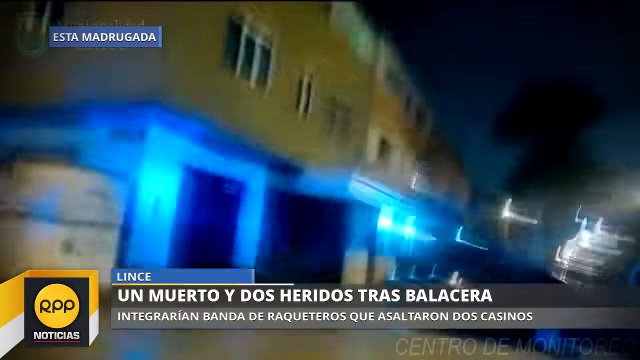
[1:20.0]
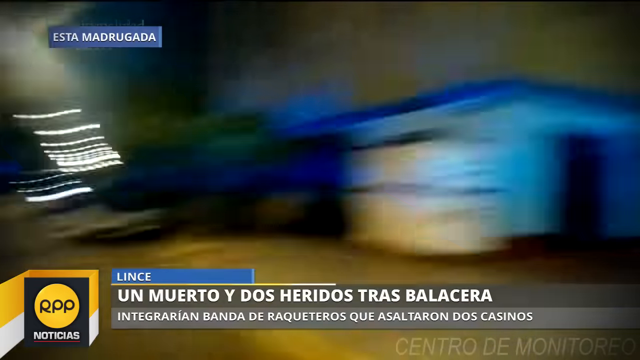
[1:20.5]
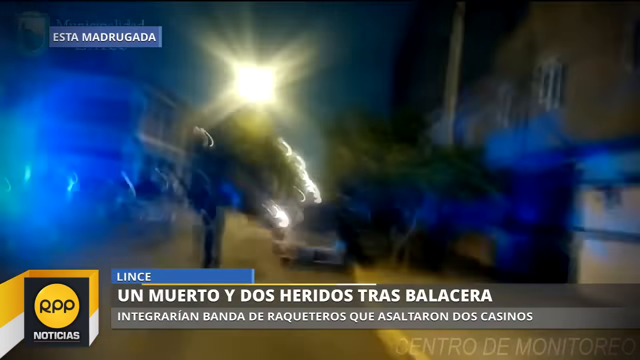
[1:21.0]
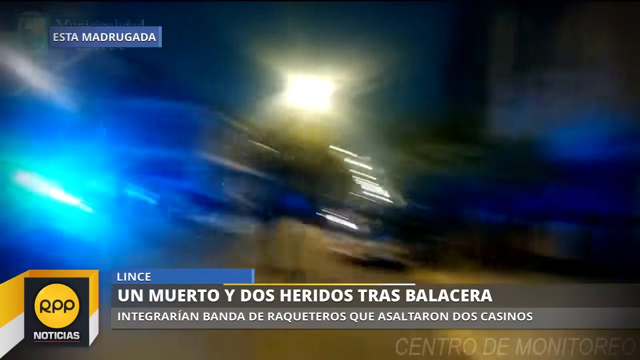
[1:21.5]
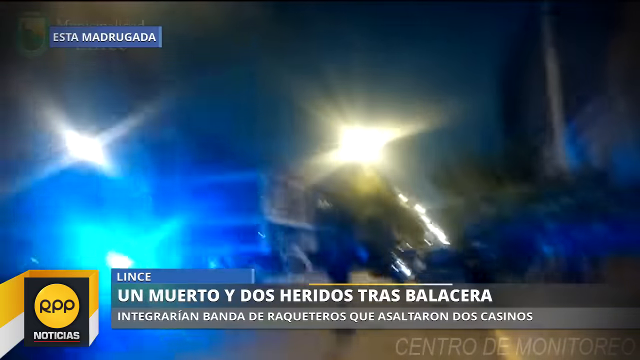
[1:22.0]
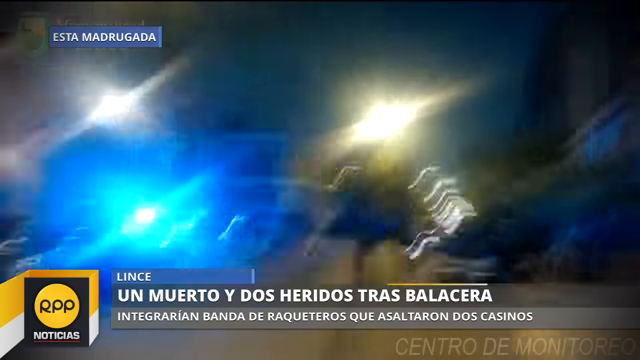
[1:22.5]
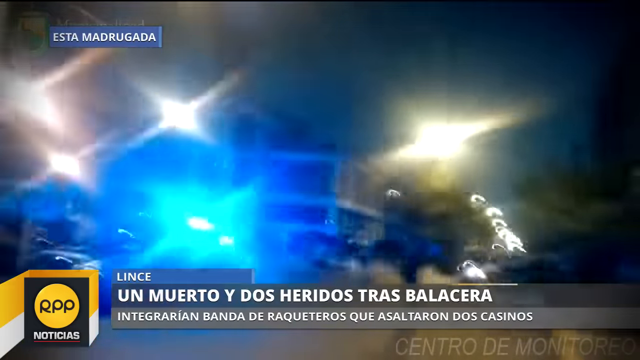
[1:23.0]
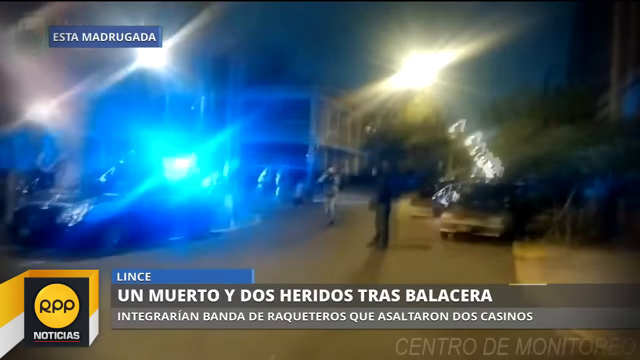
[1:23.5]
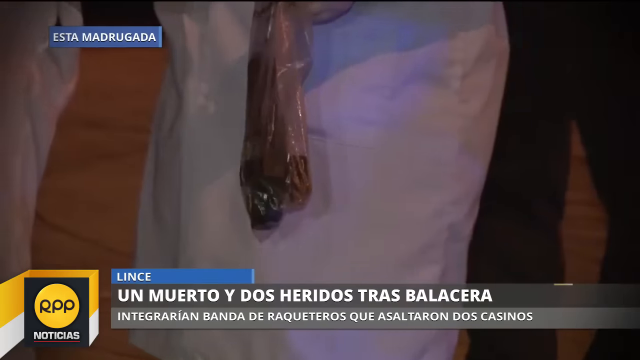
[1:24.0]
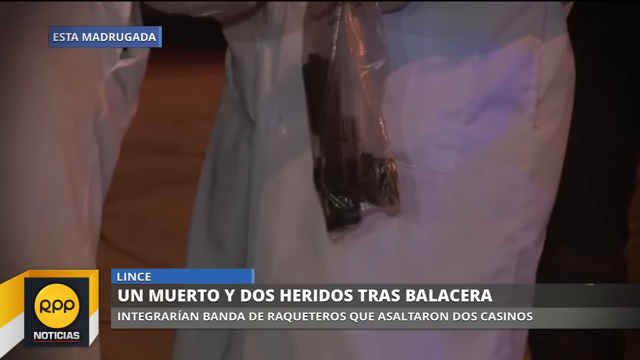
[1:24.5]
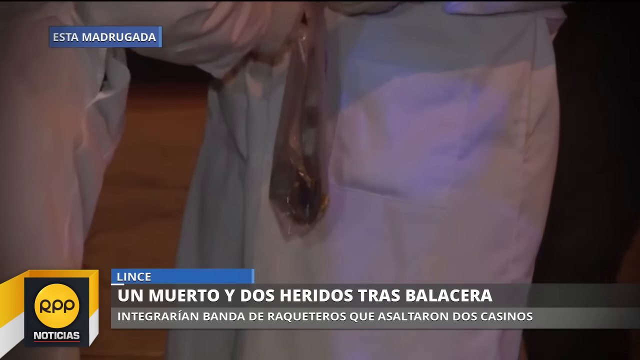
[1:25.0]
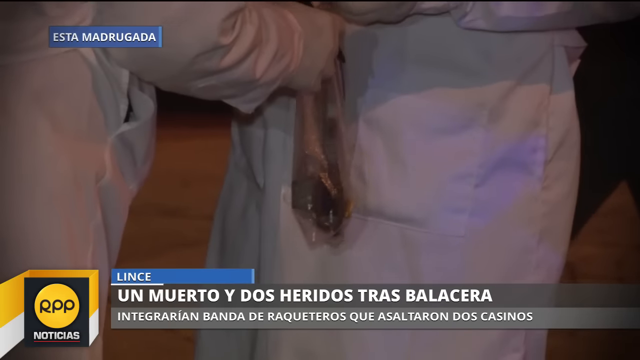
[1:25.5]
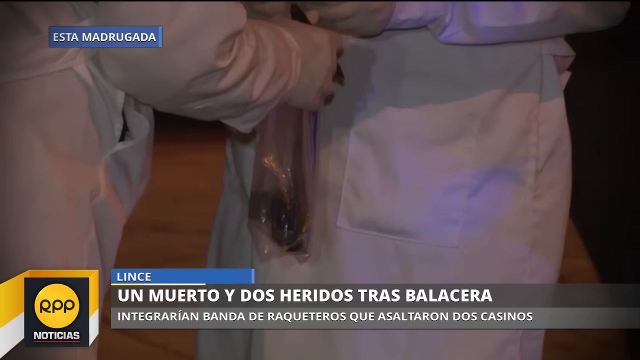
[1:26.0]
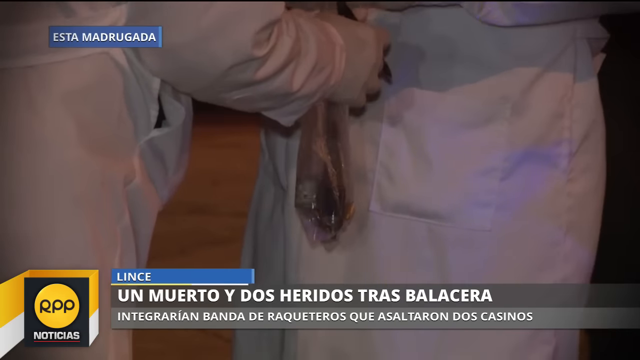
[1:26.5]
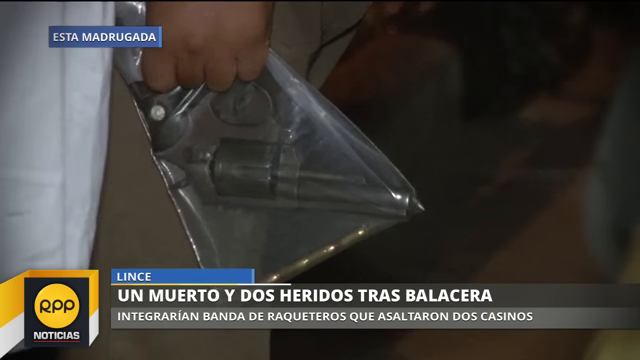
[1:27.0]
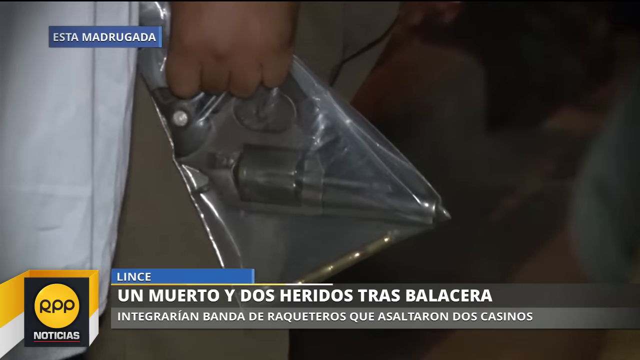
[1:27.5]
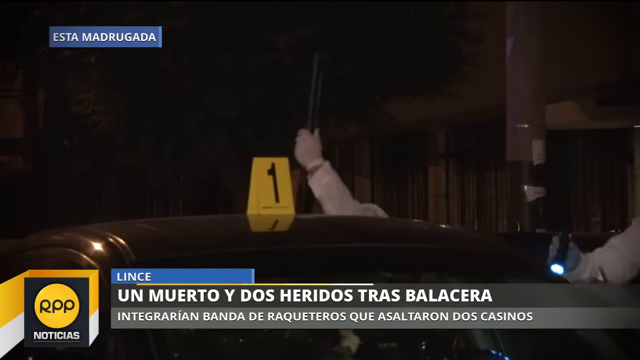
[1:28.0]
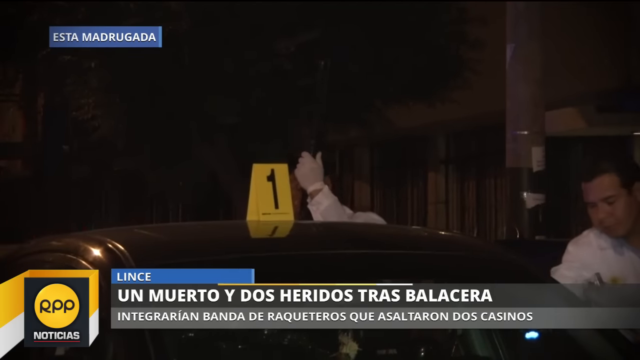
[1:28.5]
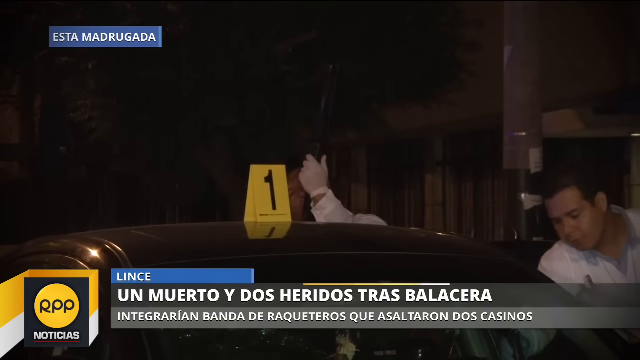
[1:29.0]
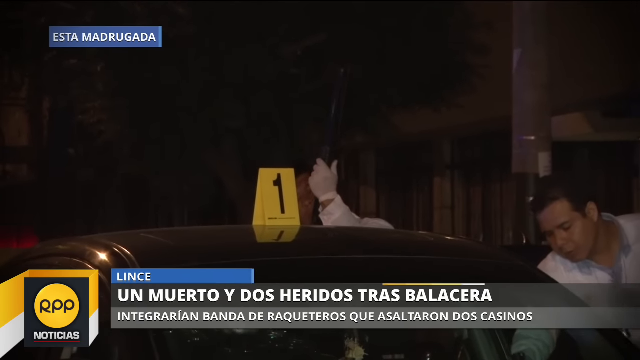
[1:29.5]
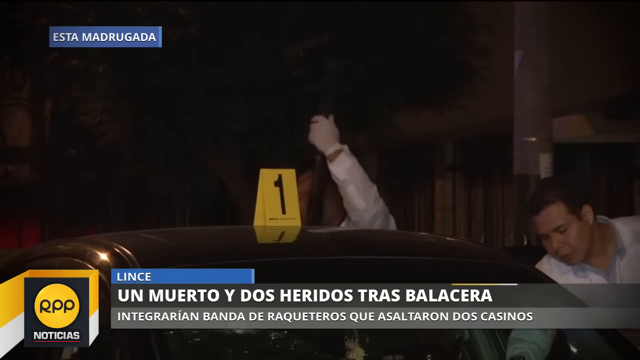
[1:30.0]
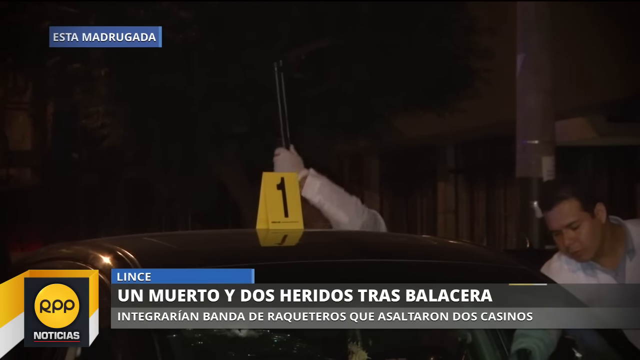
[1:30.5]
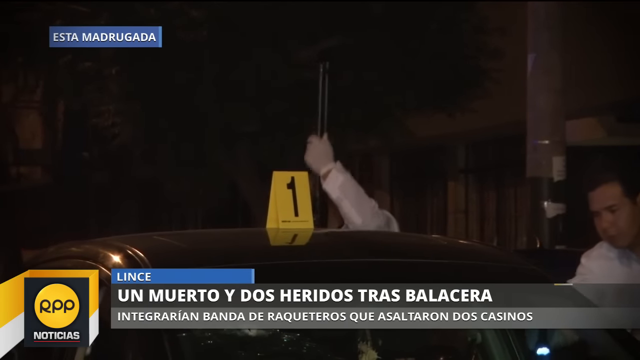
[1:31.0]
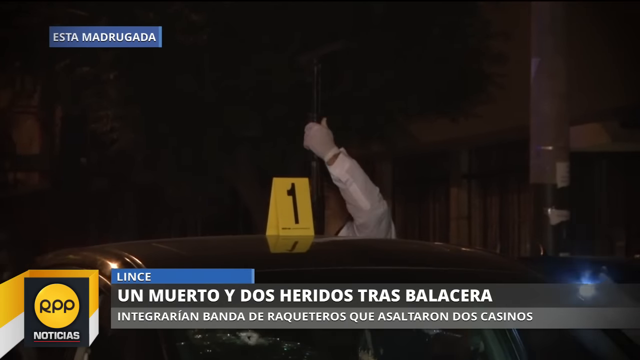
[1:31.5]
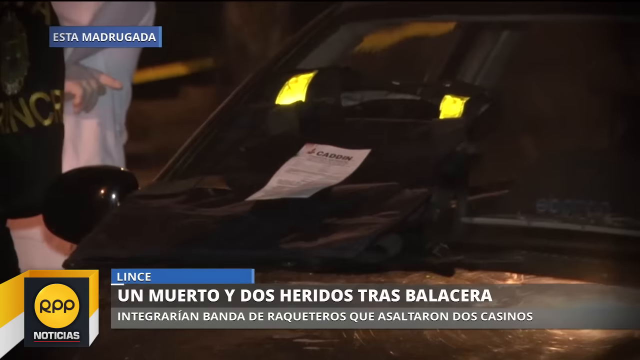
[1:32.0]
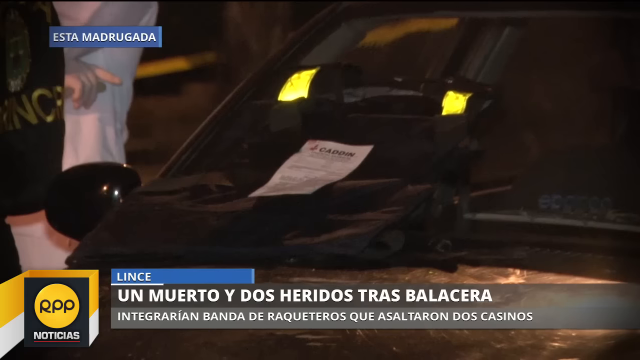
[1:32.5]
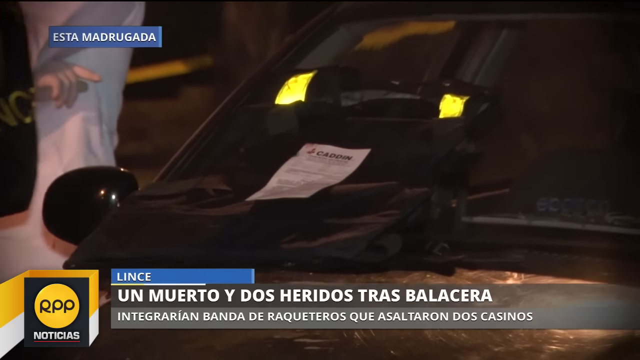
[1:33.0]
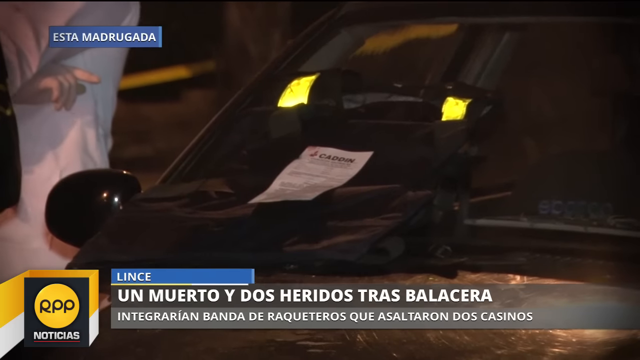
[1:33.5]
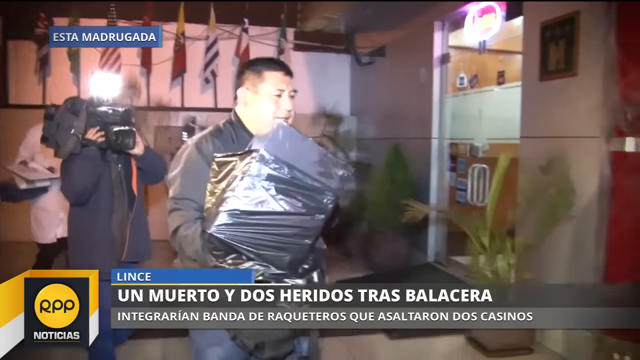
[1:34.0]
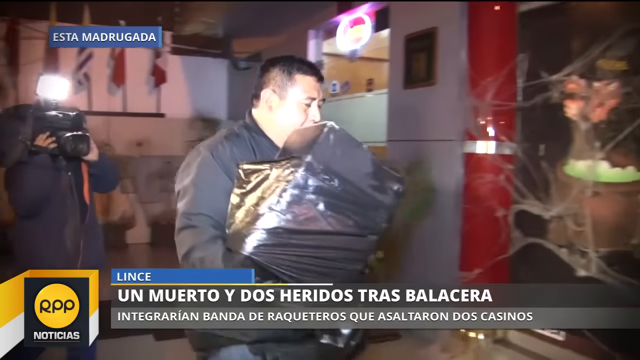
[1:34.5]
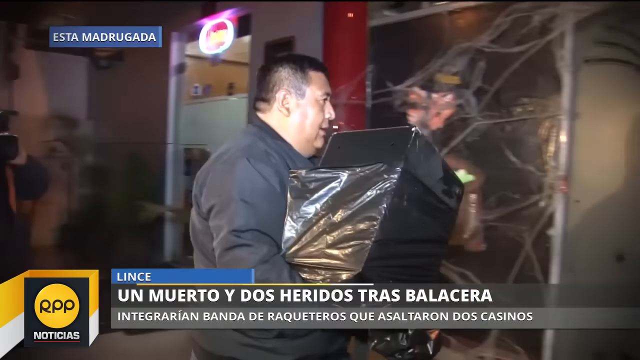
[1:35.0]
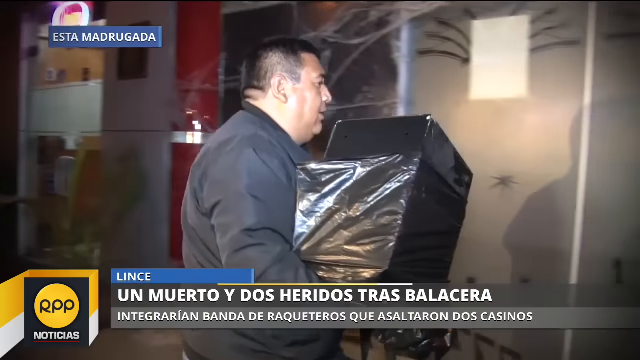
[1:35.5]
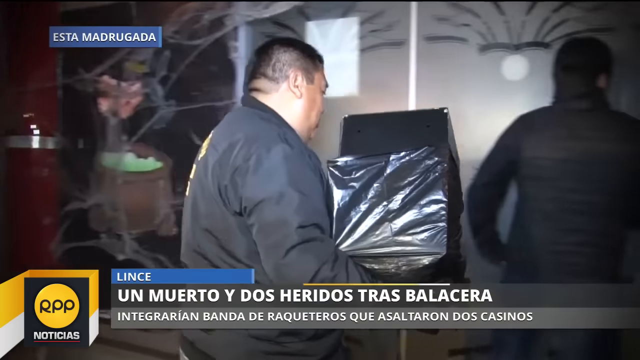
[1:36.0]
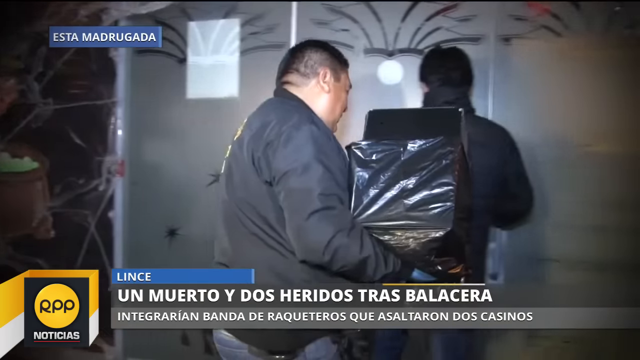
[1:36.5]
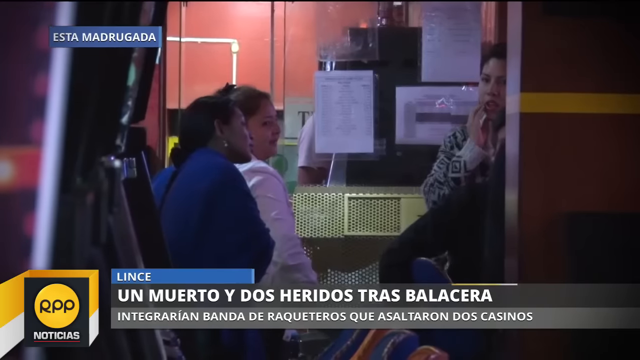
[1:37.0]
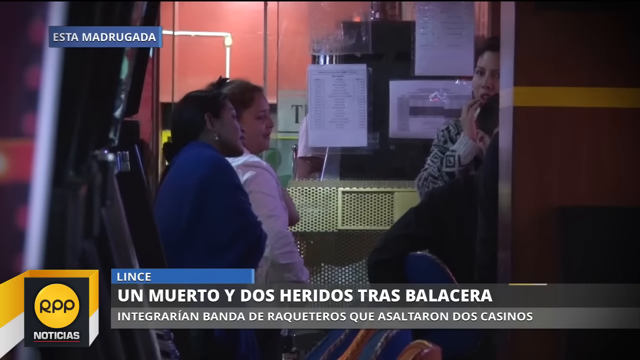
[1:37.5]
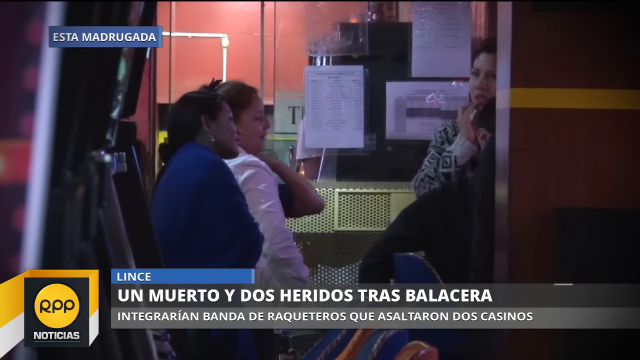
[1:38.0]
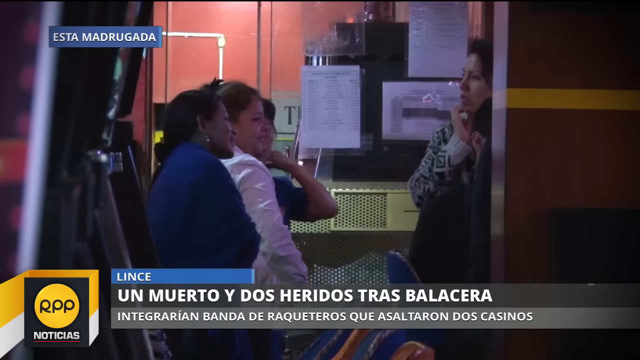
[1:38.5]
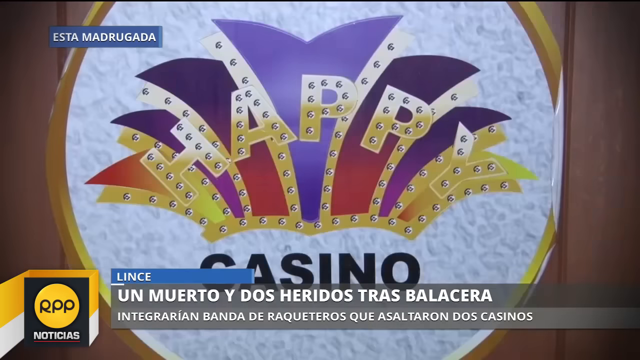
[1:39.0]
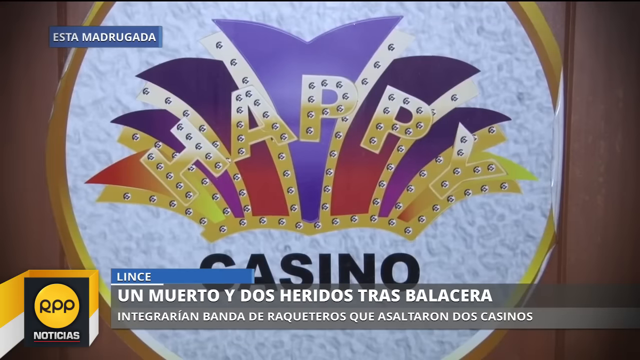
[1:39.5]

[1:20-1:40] Shaky body cam footage from a reporter or police officer shows a dark nighttime city street, with a number of vehicles parked next to them beside a number of buildings. Police officers are around with siren lights blaring, and individuals walk up and down the street. The view shifts to a number of lab technicians in white lab suits holding a zip evidence bag and placing things in it, and then to a revolver pistol in the bag. A wide shot shows a vehicle with a plastic evidence indicator on top of it bearing the number one; in the back, lab officials wearing gloves and a white lab coat interact with the vehicle and pick up other weapons, and one of them seems to be racking a shotgun to release all of its shells. A front shot shows a windshield with a tag next to one of the lab technicians. The video cuts to a wide-angle shot of a number of people carrying boxes in front of a camera before going in front of a white door. A number of women inside a building then look out of the front door toward the scene, talking. Finally a logo for a casino appears and the camera zooms out.